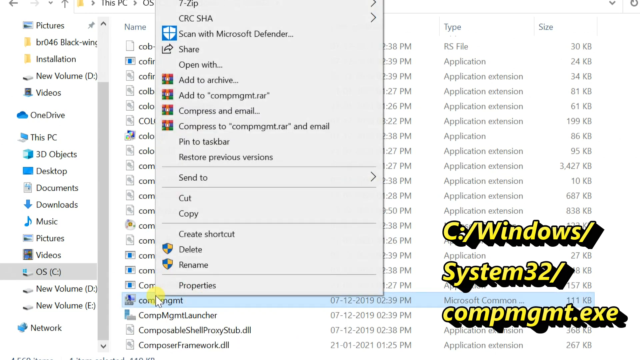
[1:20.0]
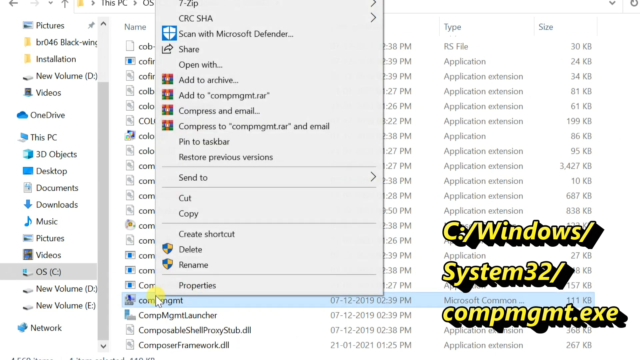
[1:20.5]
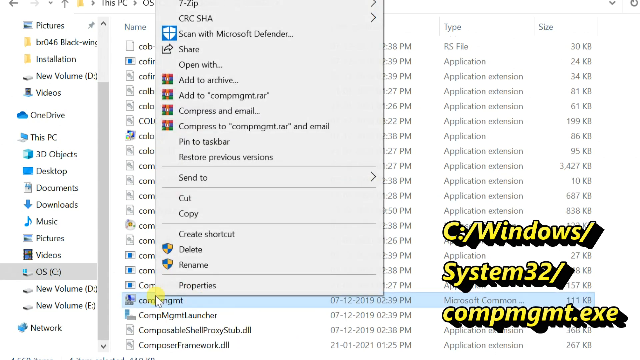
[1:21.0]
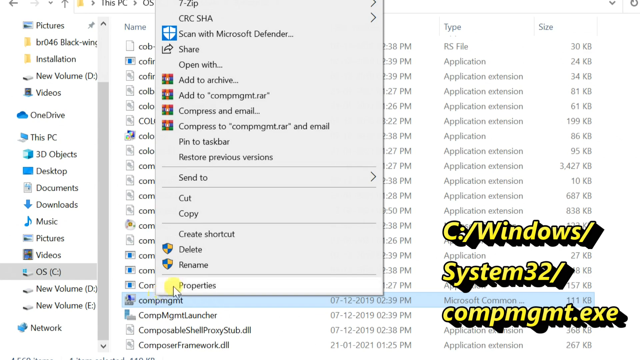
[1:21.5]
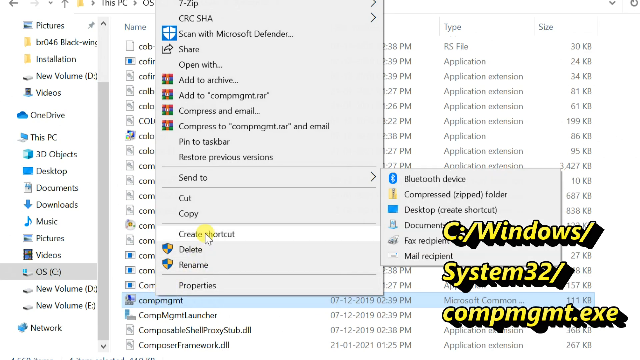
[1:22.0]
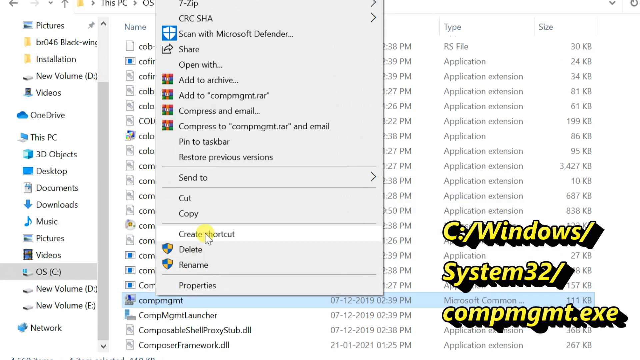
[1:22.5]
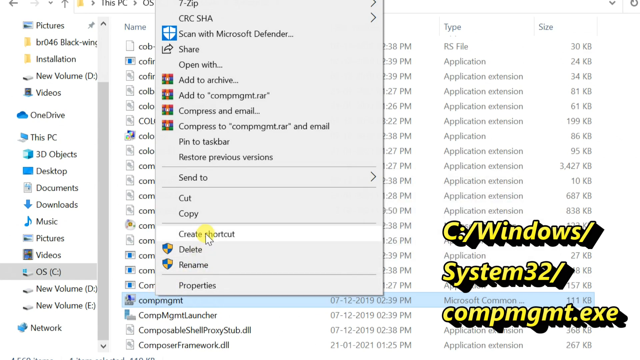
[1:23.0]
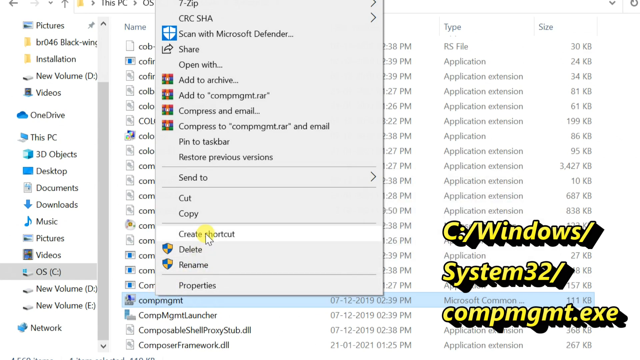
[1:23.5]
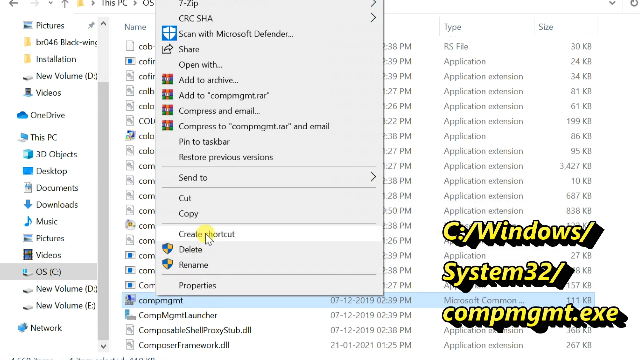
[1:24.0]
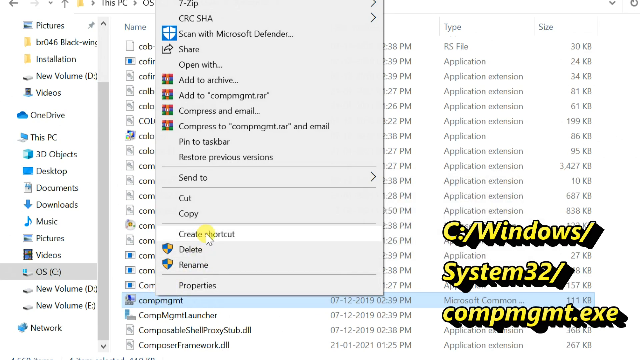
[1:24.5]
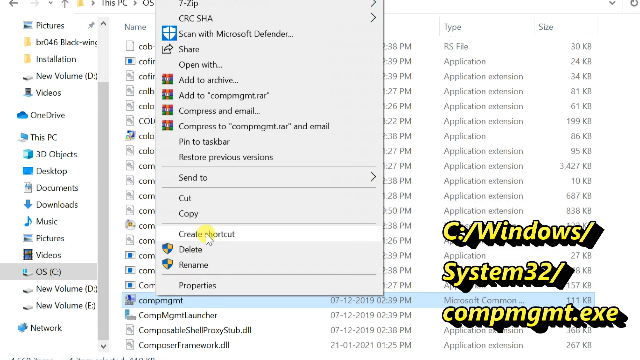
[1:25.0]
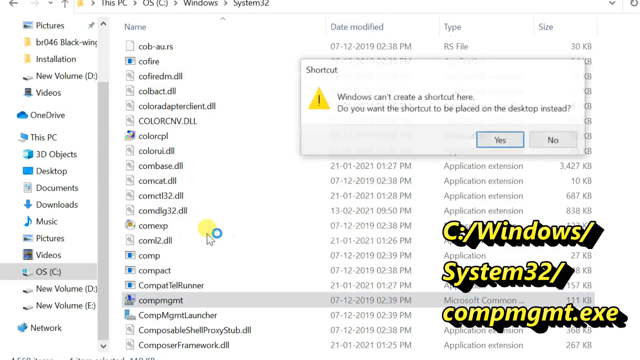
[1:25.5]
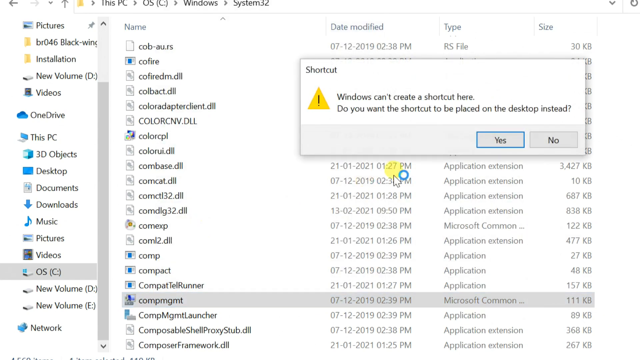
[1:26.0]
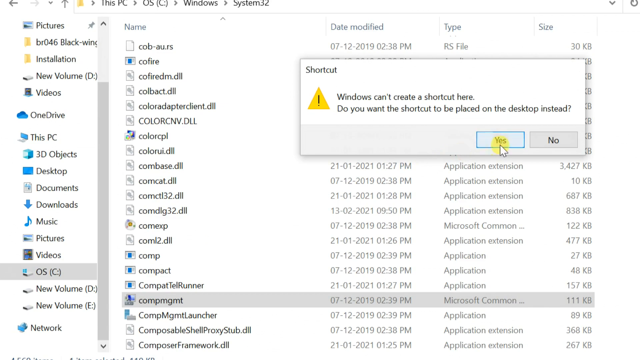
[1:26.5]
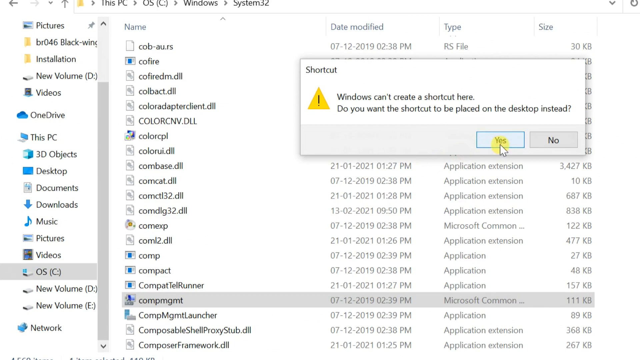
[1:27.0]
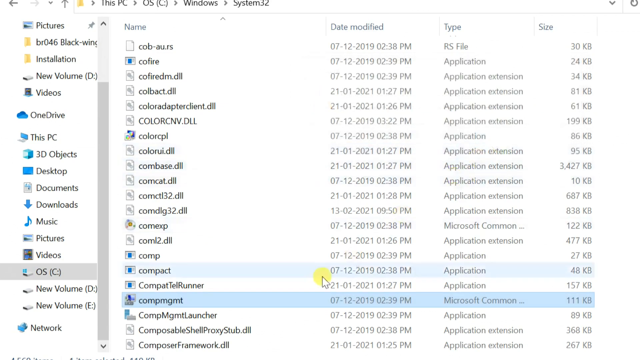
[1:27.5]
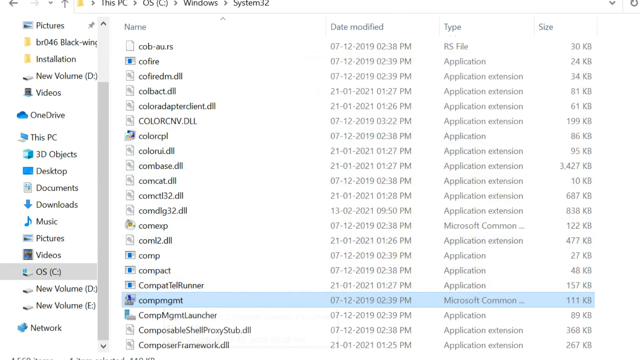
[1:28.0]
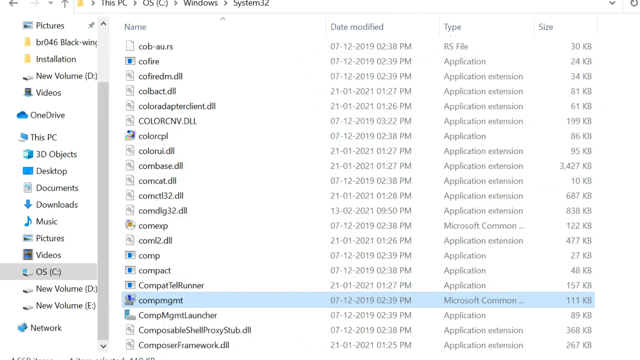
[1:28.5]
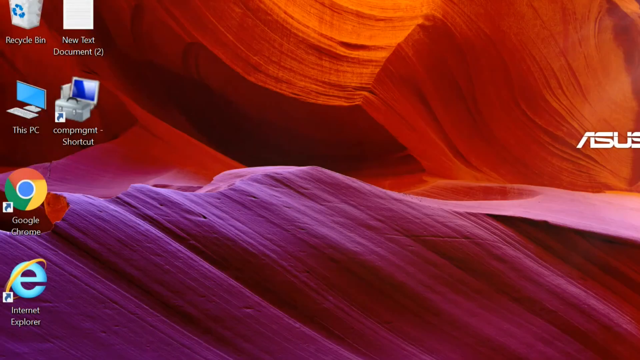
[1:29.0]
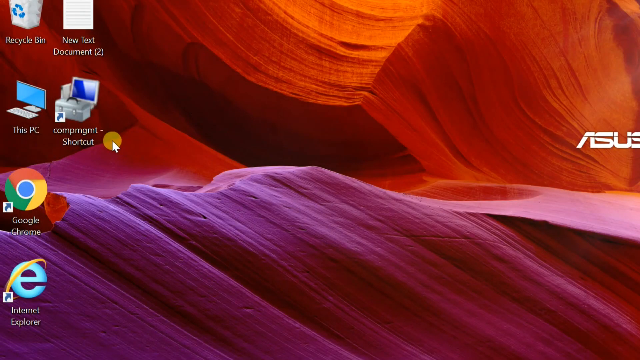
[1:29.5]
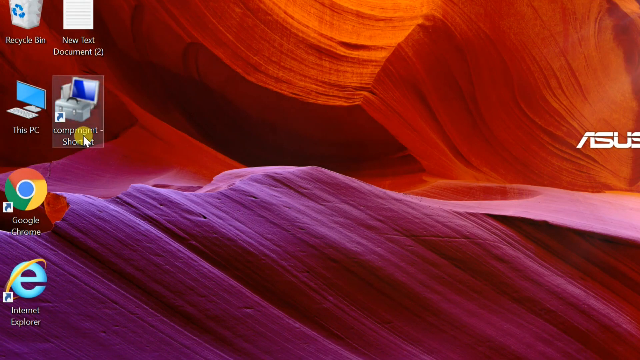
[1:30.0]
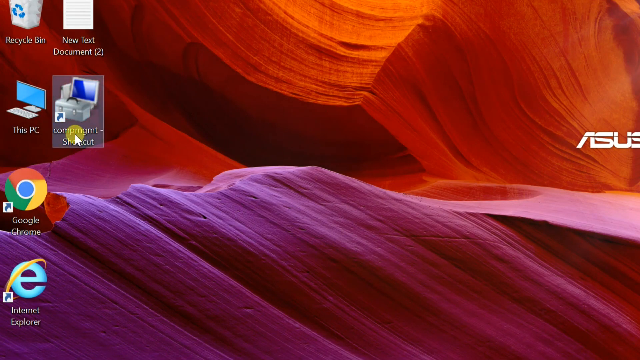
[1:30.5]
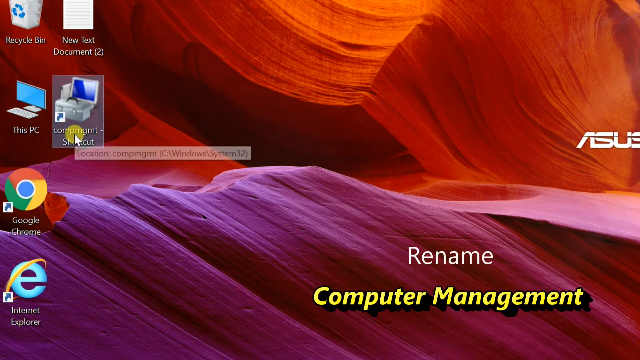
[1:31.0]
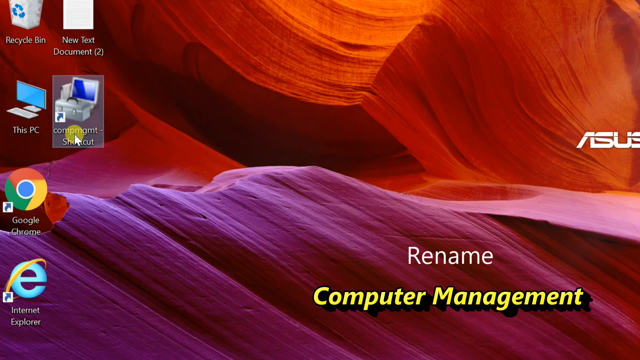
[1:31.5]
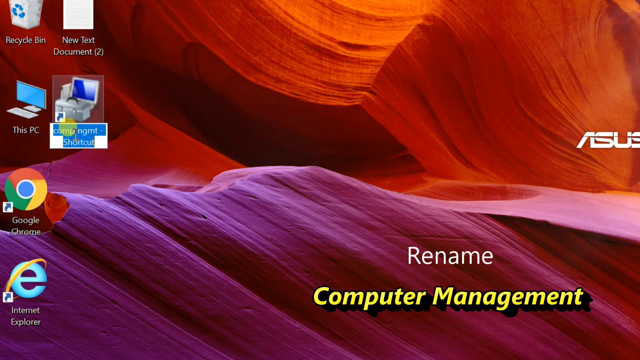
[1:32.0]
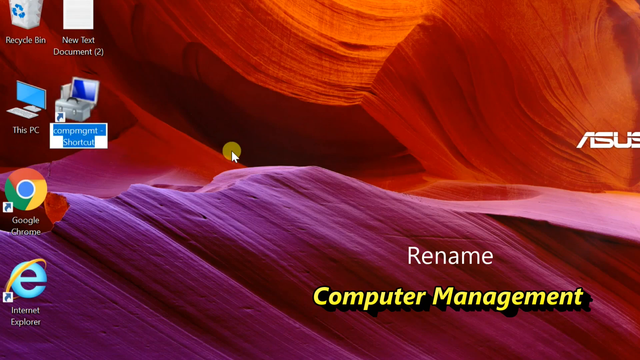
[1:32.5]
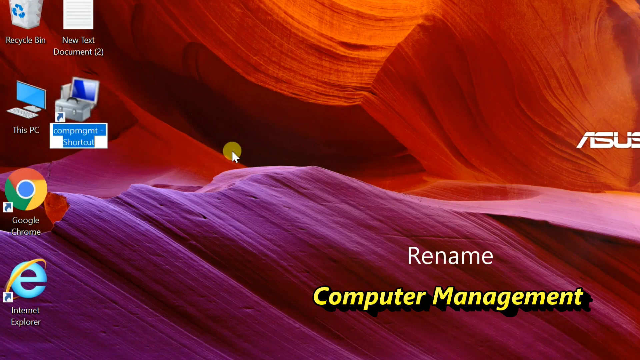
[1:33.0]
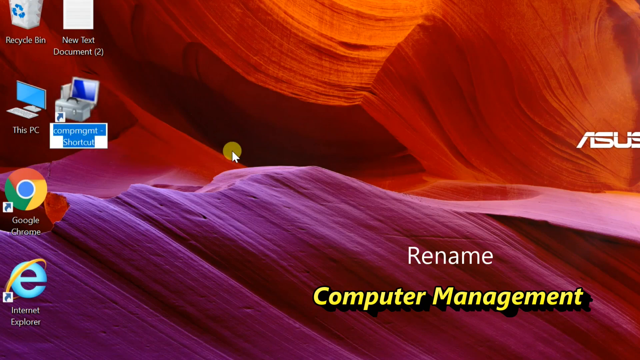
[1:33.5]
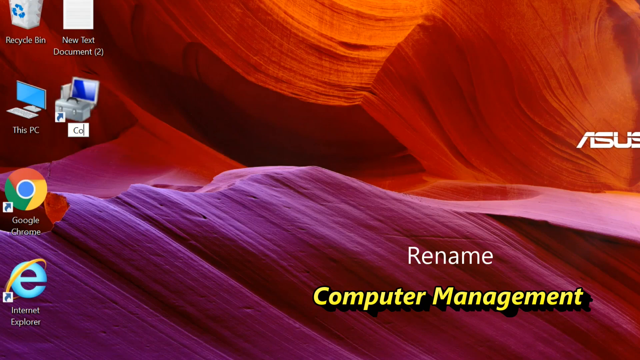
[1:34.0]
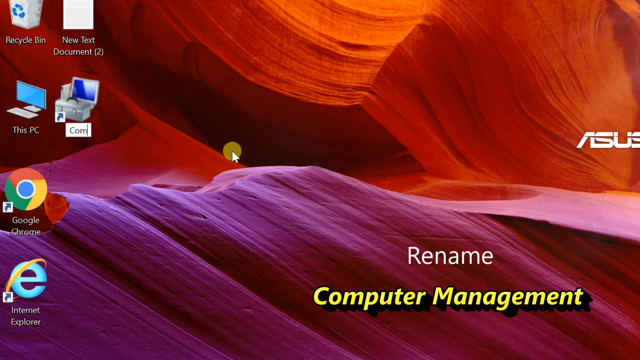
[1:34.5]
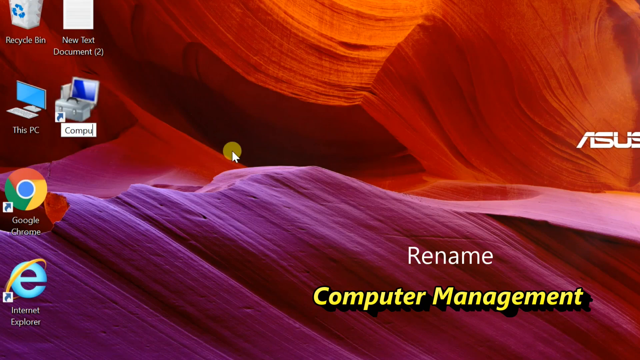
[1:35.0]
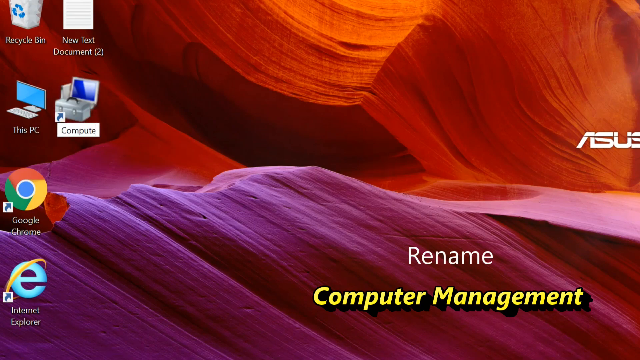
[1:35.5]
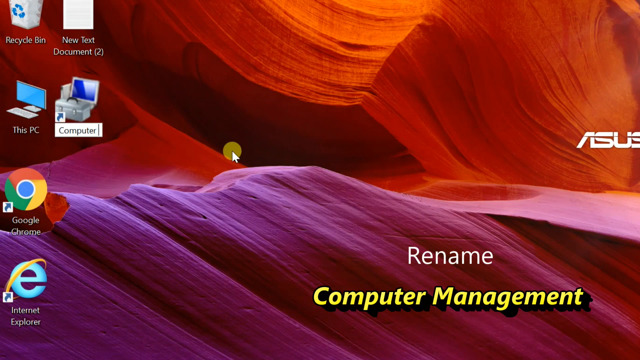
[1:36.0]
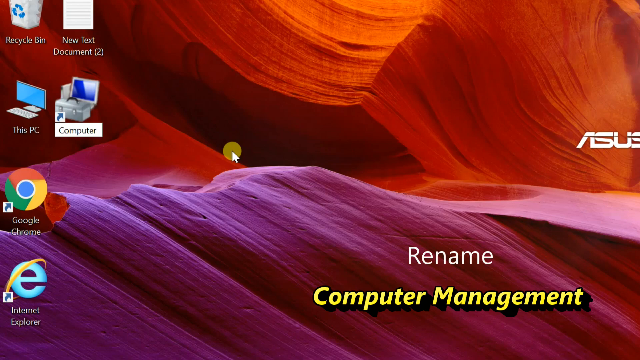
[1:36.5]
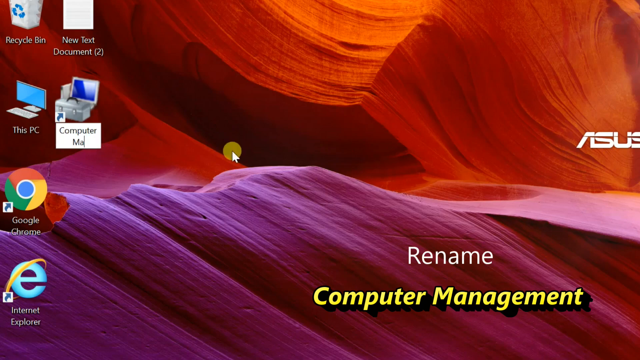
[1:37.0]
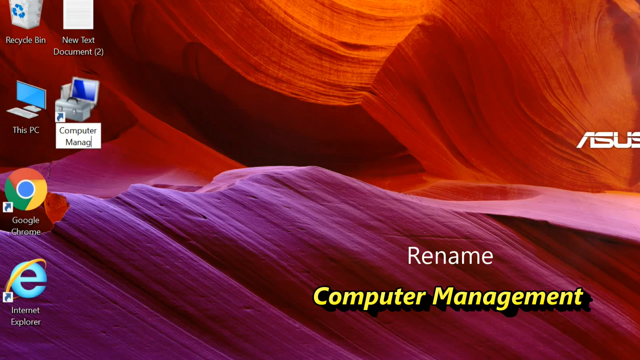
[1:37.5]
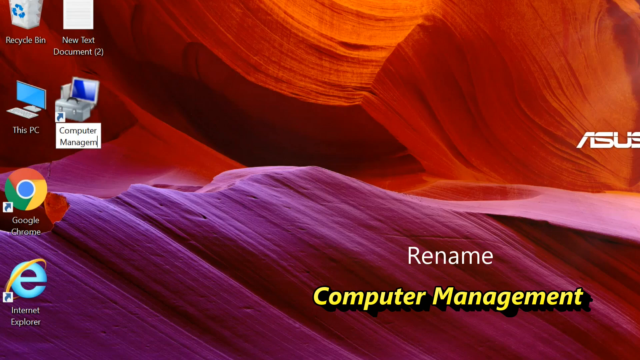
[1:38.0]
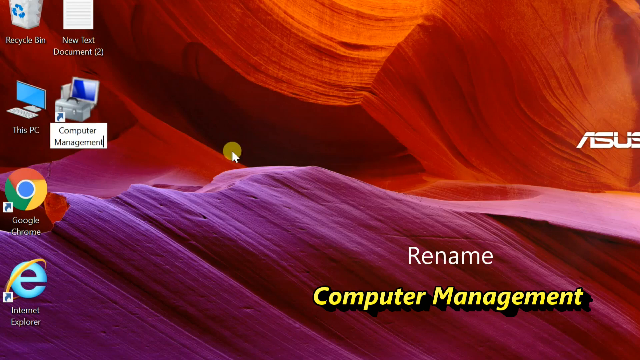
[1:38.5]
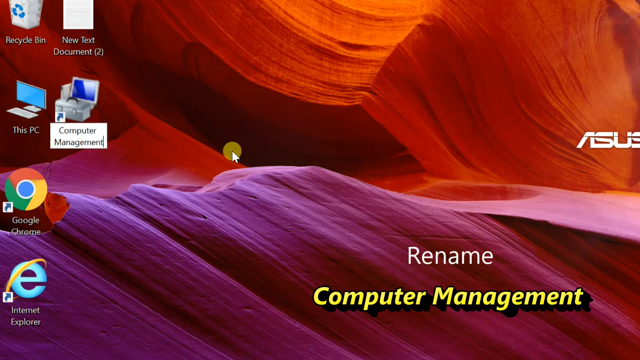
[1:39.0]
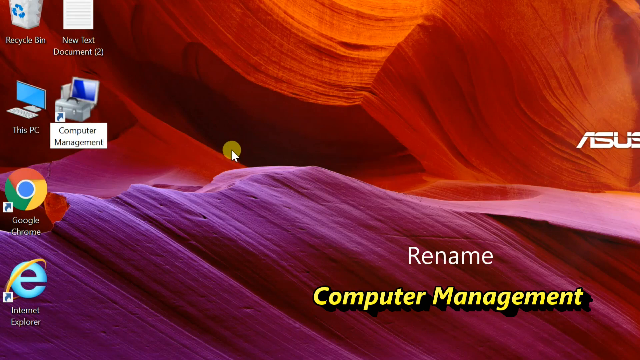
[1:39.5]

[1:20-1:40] The user clicks on component management and then on create shortcut. A window labeled "shortcut" pops up with a yellow triangle containing an exclamation point. It says "Windows cannot create a shortcut here. Do you like to create a shortcut that is placed on the desktop instead?" The user clicks Yes, closes the tab of files, and a shortcut appears on the desktop. They click on it and rename the computer shortcut icon "Computer Management"; the screen shows "Rename Computer Management."